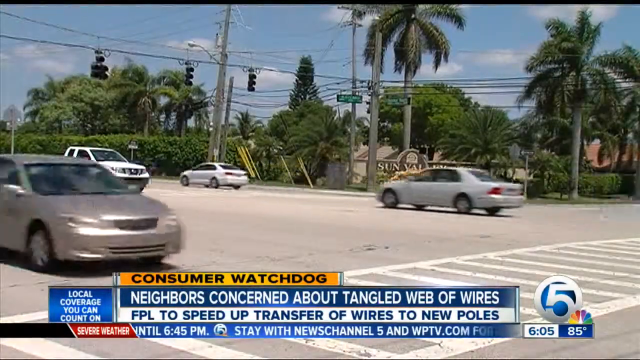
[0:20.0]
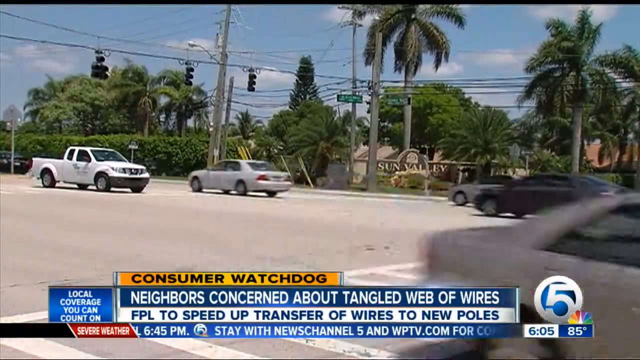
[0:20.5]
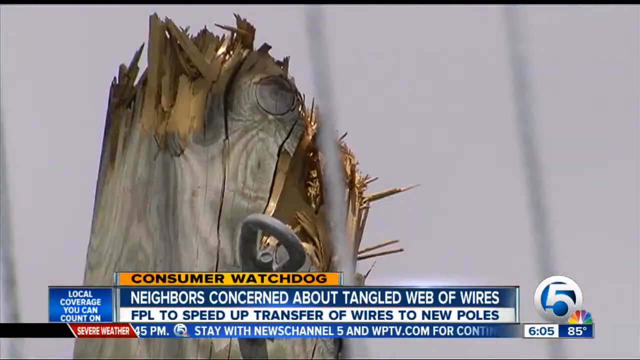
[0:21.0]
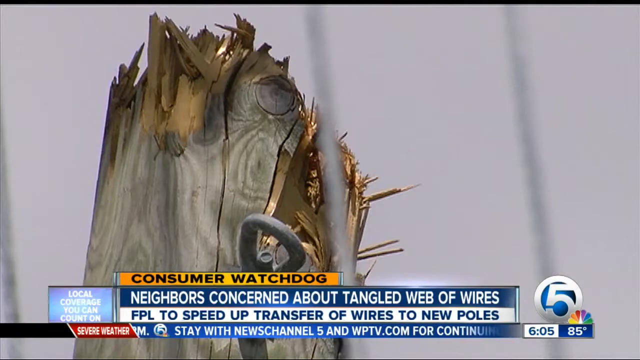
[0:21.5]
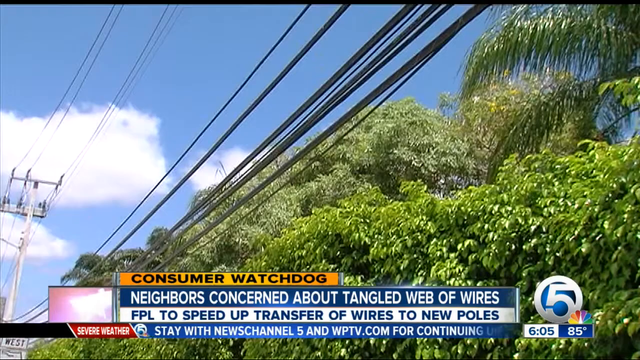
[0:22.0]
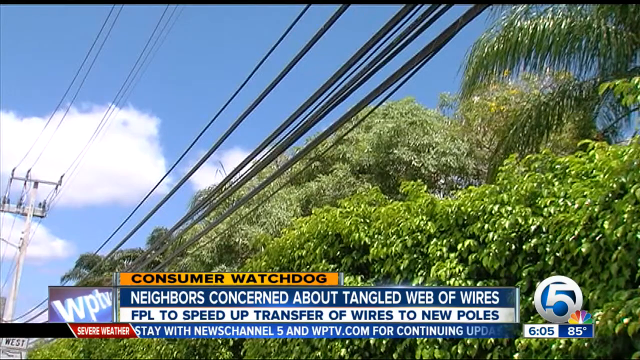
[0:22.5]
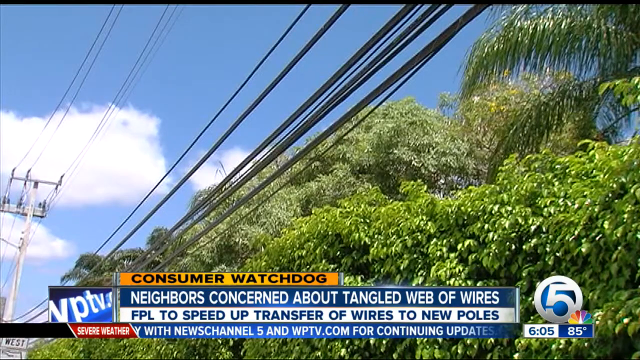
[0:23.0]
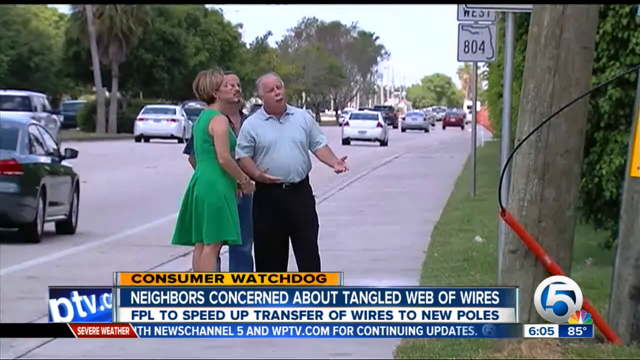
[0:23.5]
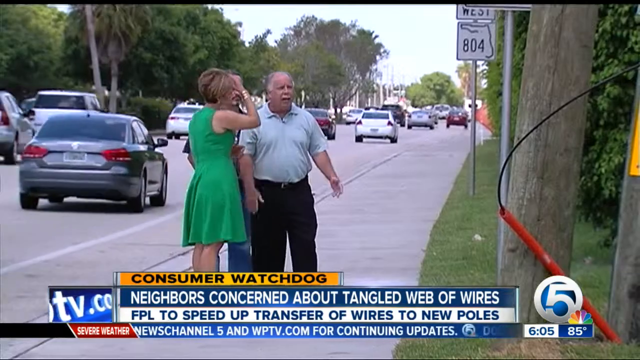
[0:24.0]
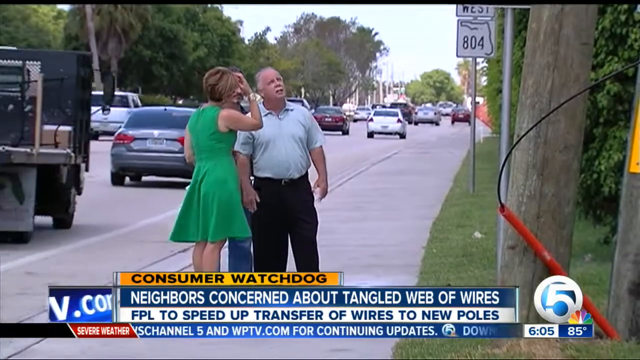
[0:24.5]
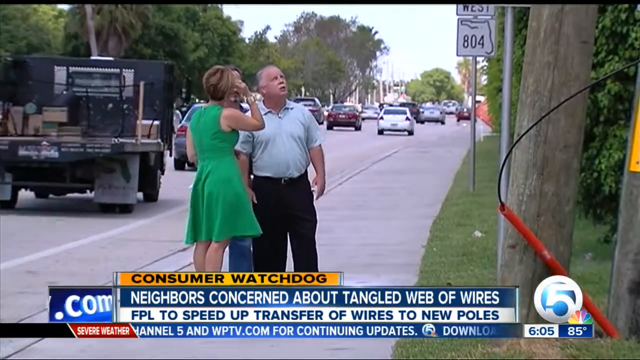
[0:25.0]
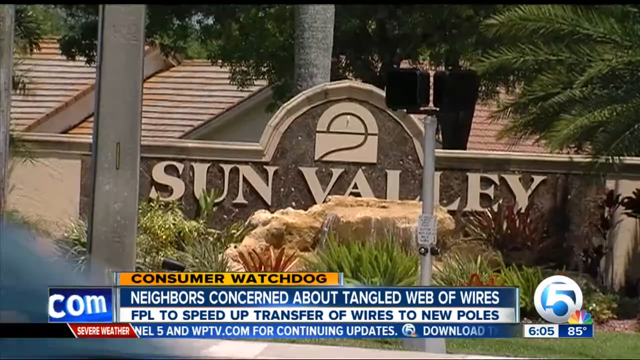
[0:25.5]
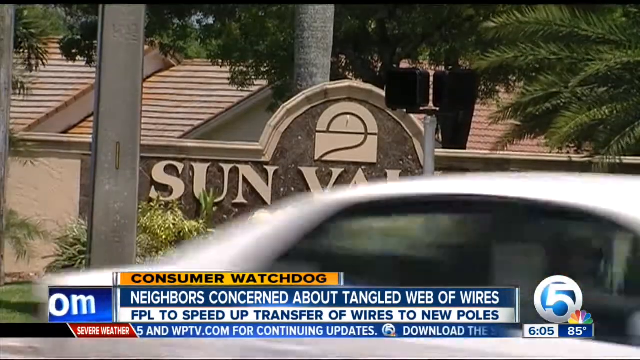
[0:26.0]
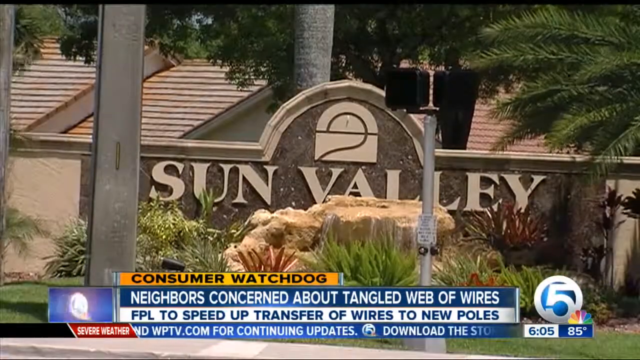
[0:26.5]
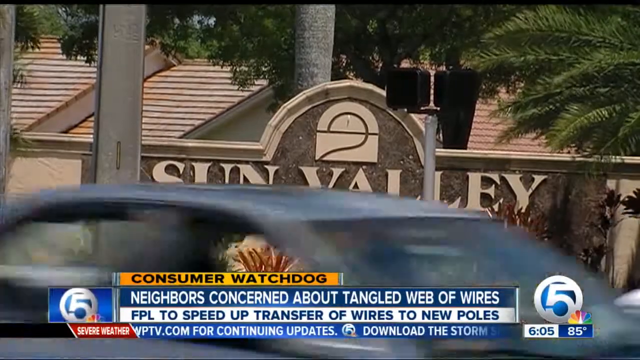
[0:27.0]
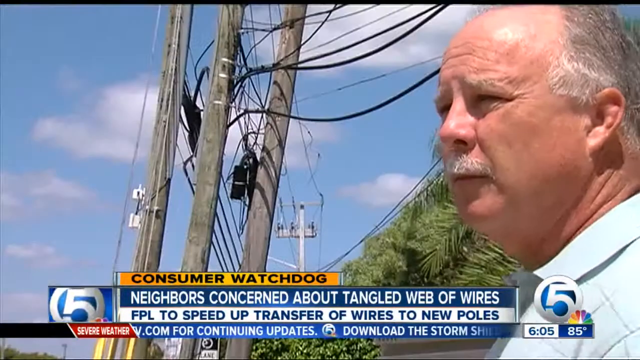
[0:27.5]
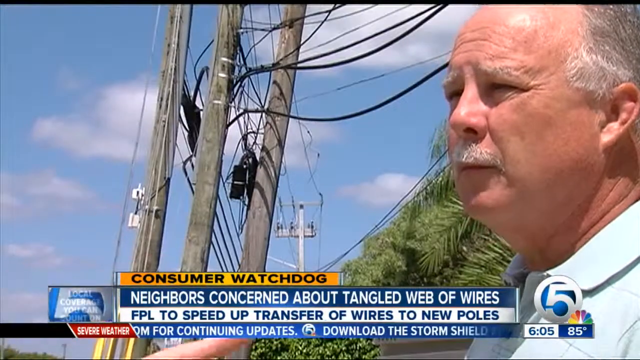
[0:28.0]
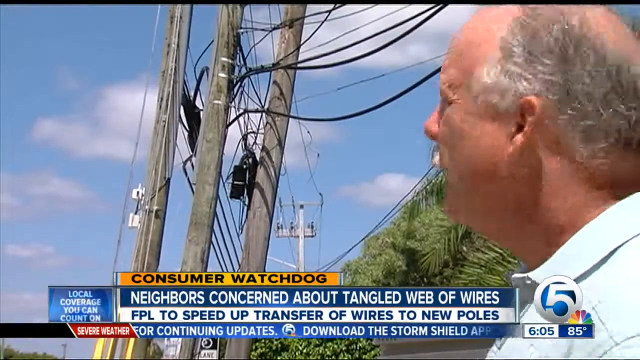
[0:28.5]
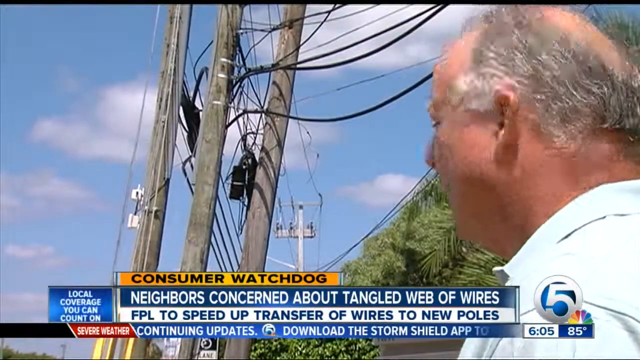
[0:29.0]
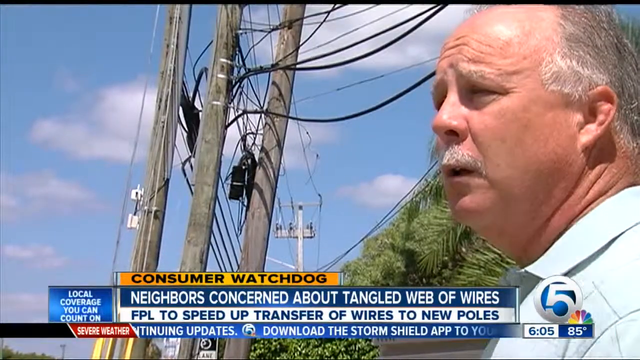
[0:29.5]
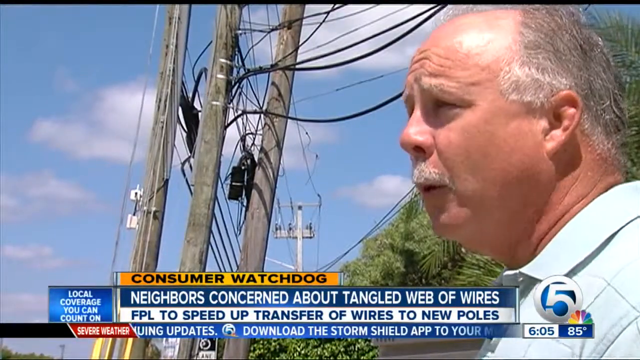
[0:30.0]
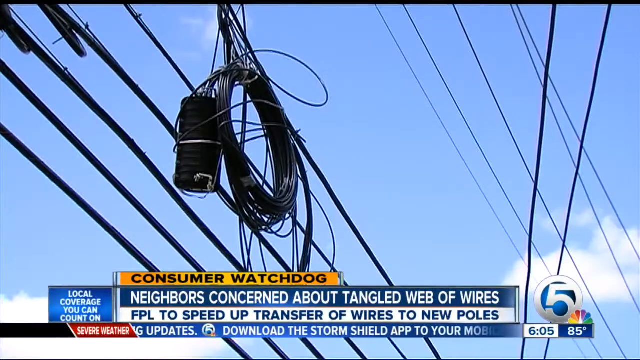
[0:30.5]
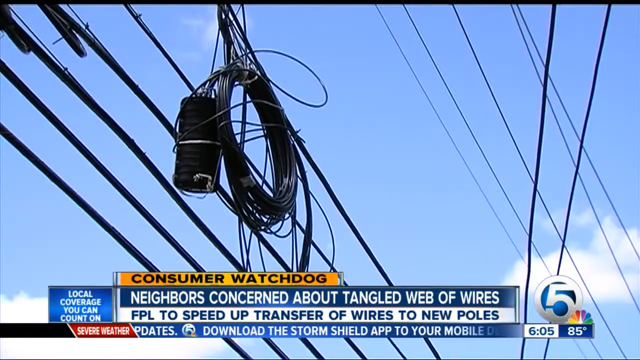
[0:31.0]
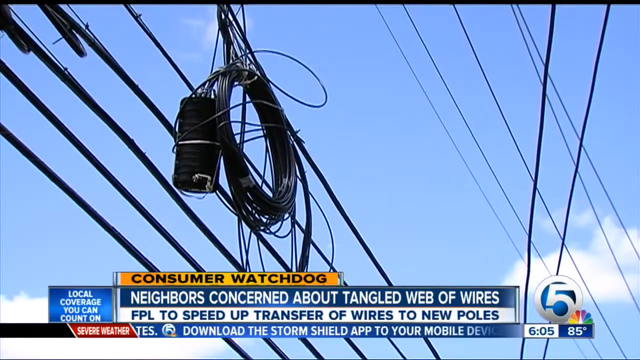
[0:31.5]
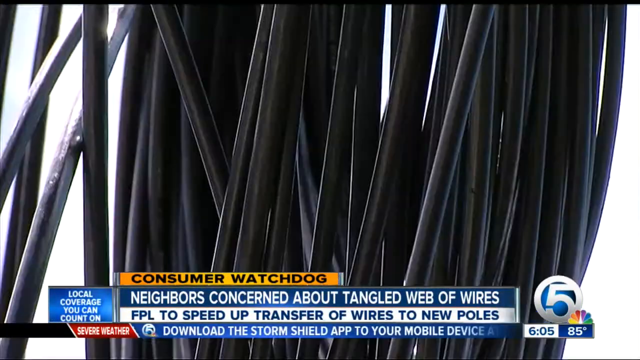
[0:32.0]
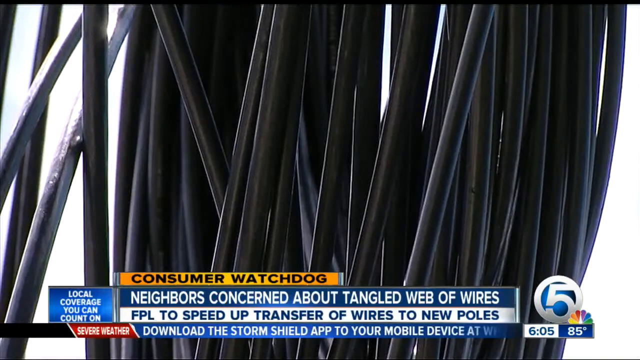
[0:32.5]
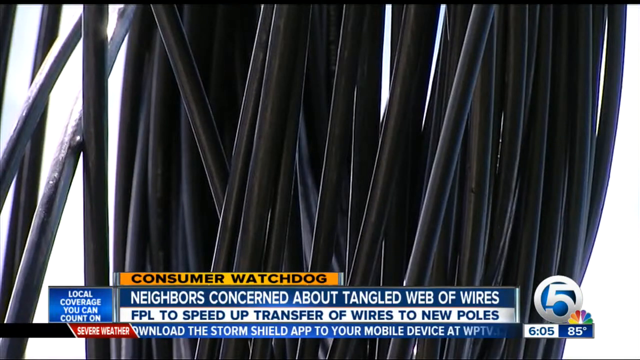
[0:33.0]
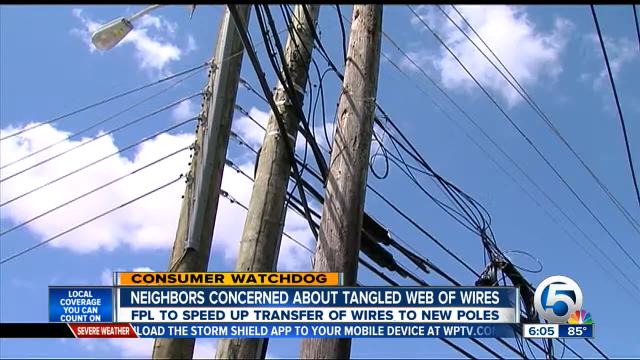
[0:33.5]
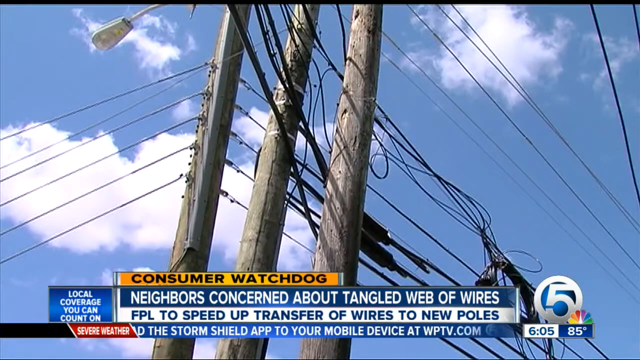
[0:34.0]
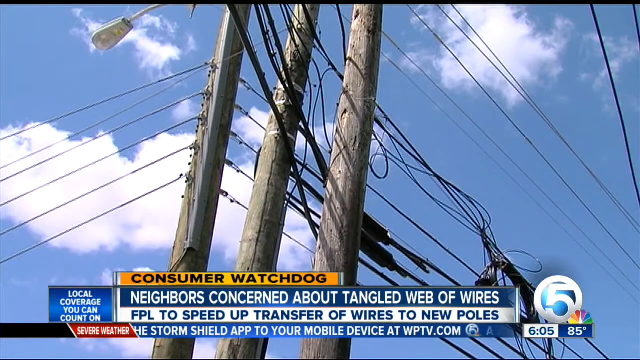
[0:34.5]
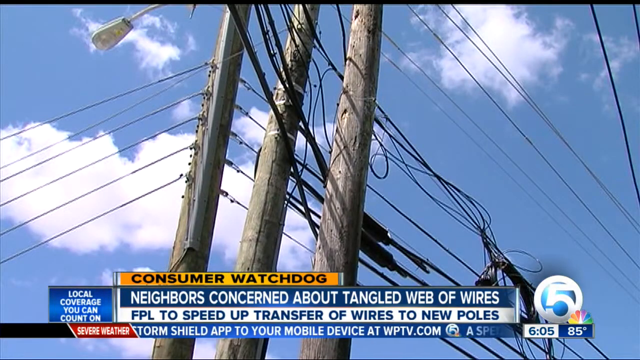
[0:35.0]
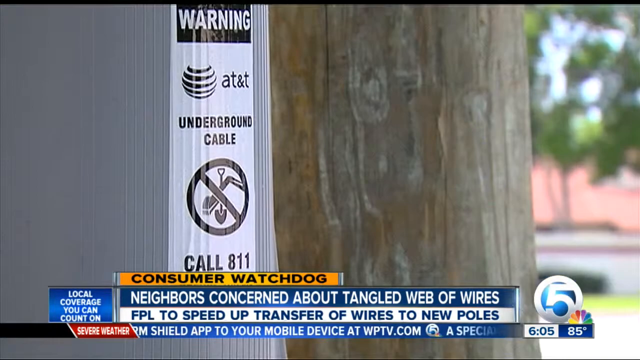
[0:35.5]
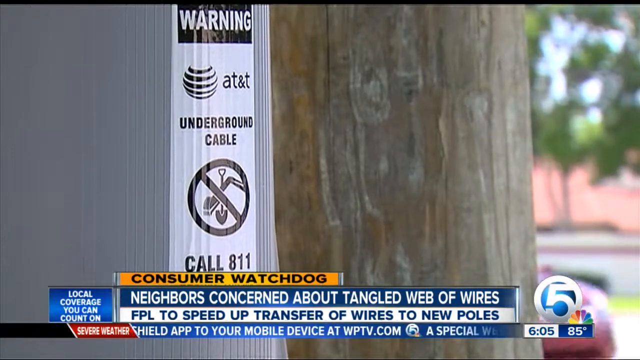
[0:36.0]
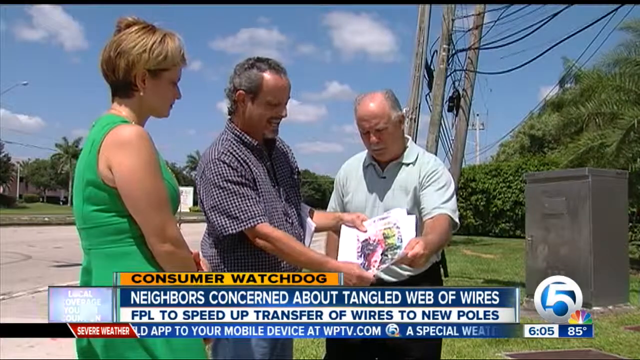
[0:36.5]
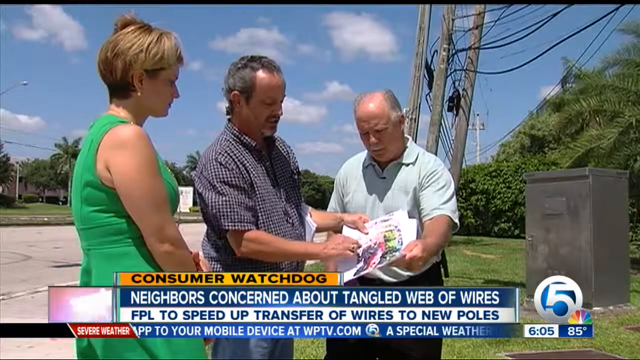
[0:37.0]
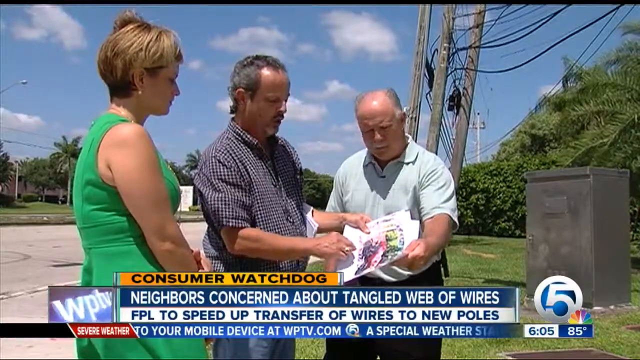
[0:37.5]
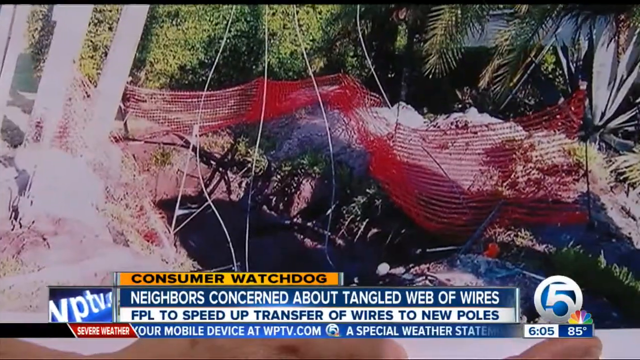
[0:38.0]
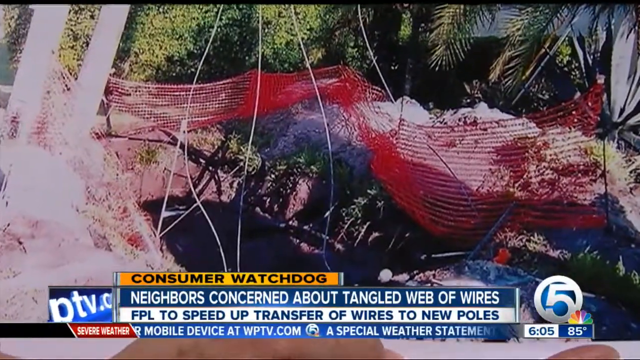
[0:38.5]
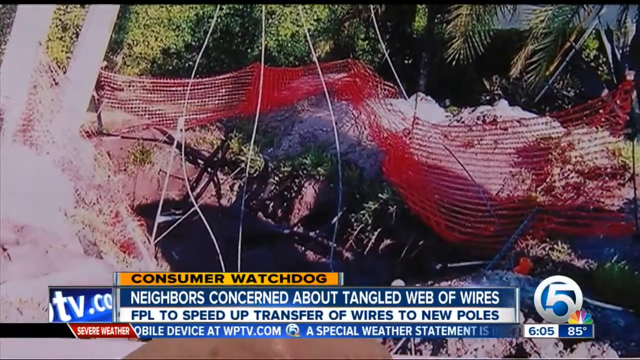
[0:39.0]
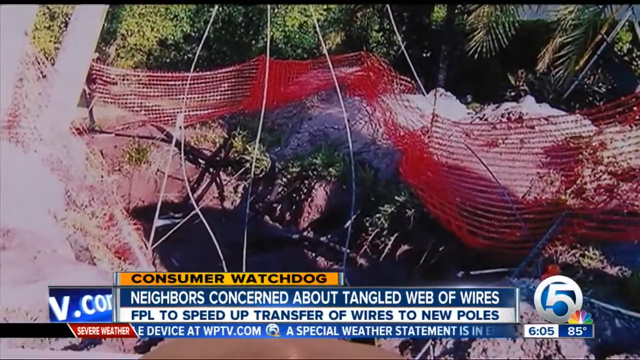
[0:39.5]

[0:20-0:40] Cars come and go on the street at the intersection. A zoomed-in shot shows a piece of wood that has been broken, with the broken edges visible at the top. From a different angle the camera looks up at the telephone wires, with the sky and clouds in the background and some trees on the right-hand side. Looking down the street and sidewalk, maybe 10-15 feet away, the same reporter stands next to two men. One man, in a short-sleeved shirt and pants, looks up at the telephone pole and appears to be talking to the reporter. Next comes the front of what looks like some kind of development entrance: apparently a brick wall, maybe four or five feet high, with "Sun Valley" across it. Cars go past the sign, and a palm tree blows in the wind in the background. The camera then zooms in on the same man who was talking to the reporter; he is on the right-hand side looking toward the left, speaking and at certain points shaking his head no, back and forth, as if disagreeing.